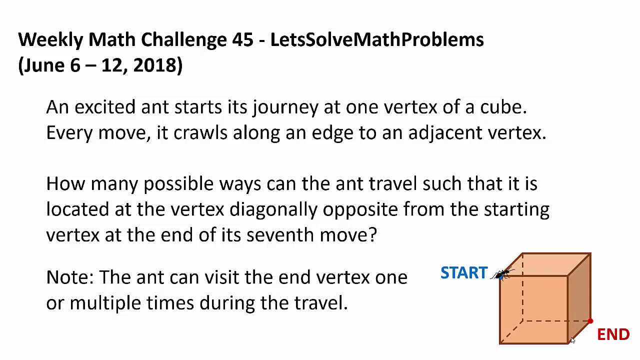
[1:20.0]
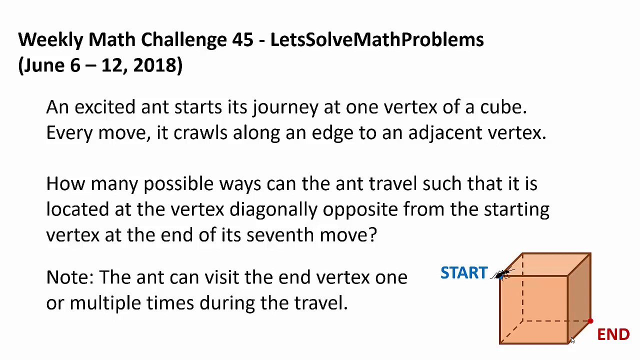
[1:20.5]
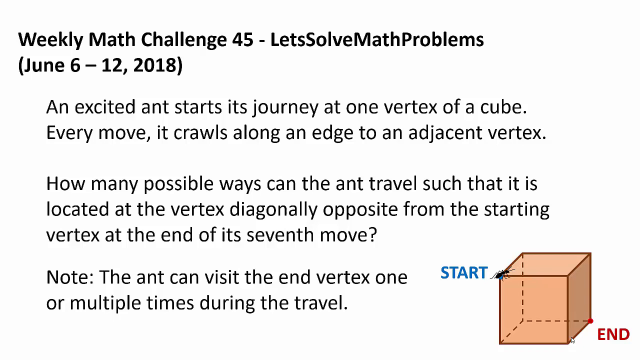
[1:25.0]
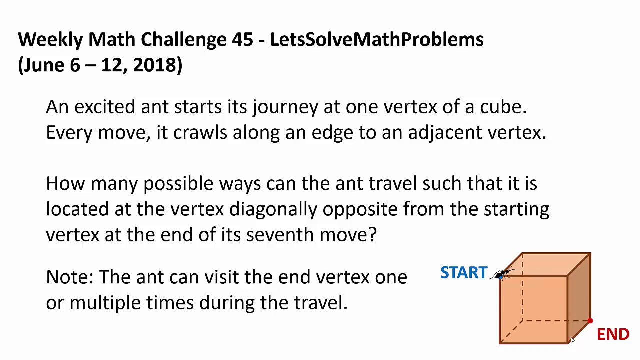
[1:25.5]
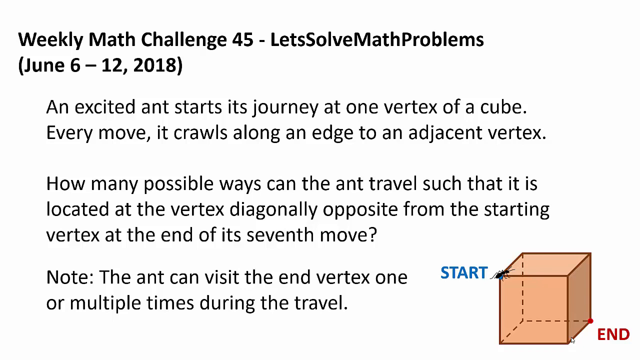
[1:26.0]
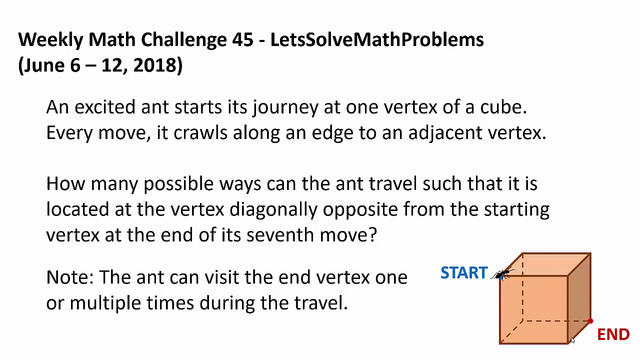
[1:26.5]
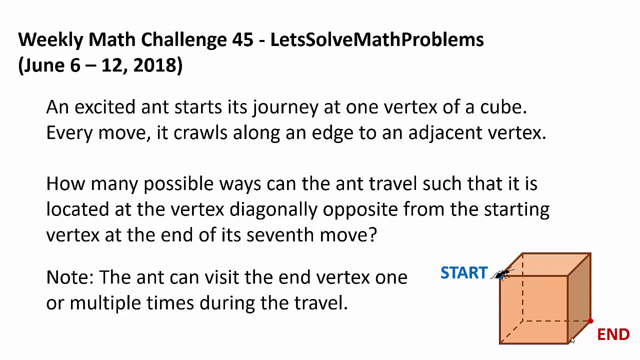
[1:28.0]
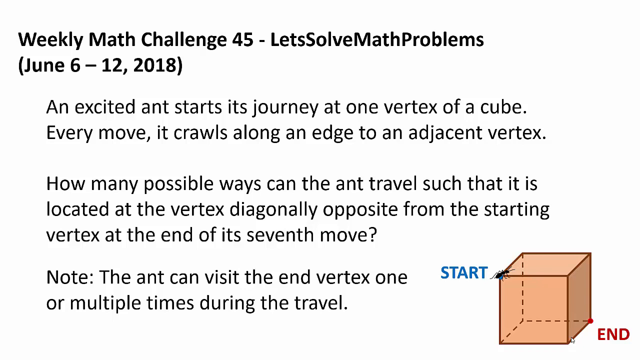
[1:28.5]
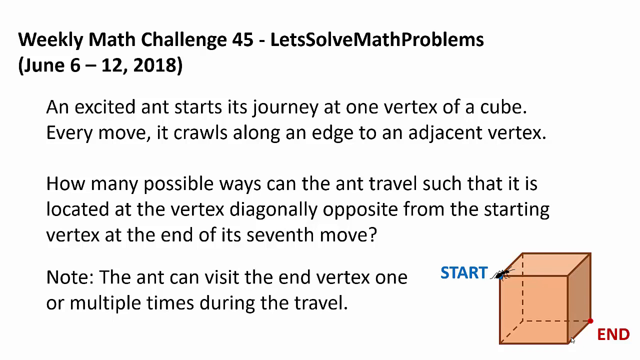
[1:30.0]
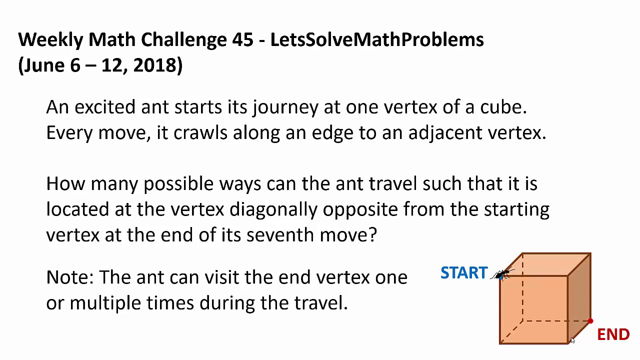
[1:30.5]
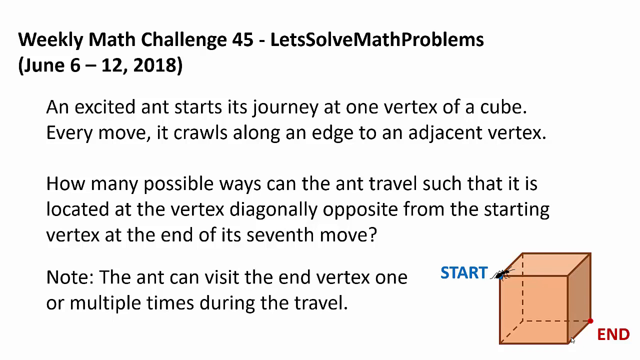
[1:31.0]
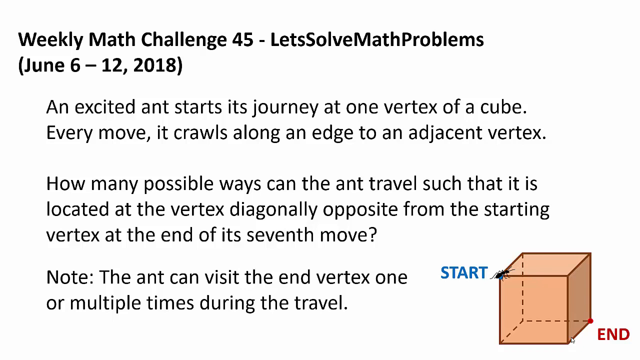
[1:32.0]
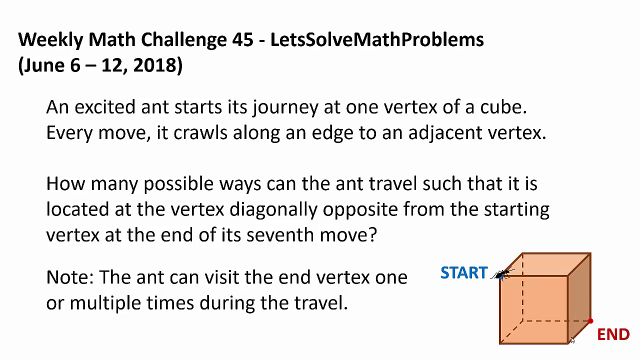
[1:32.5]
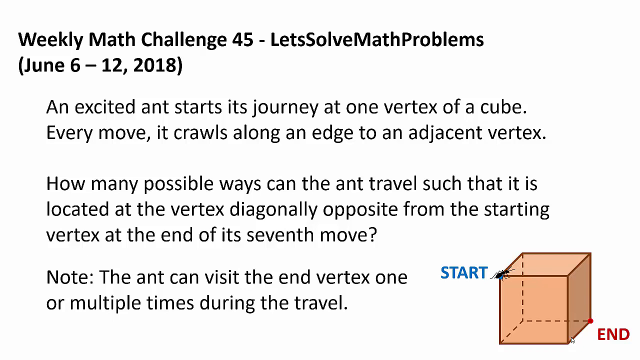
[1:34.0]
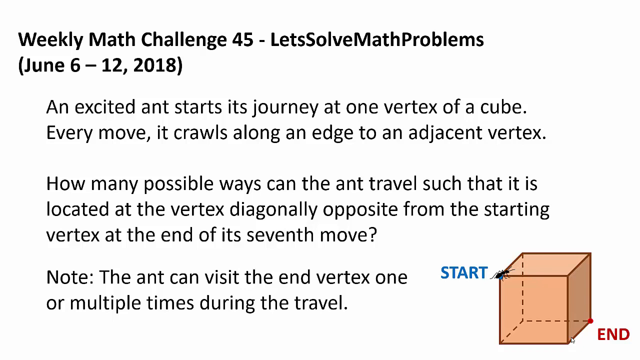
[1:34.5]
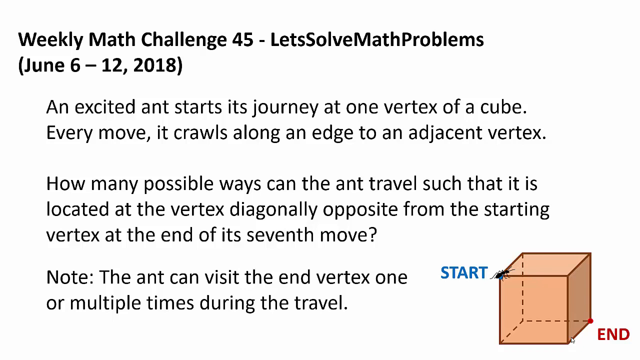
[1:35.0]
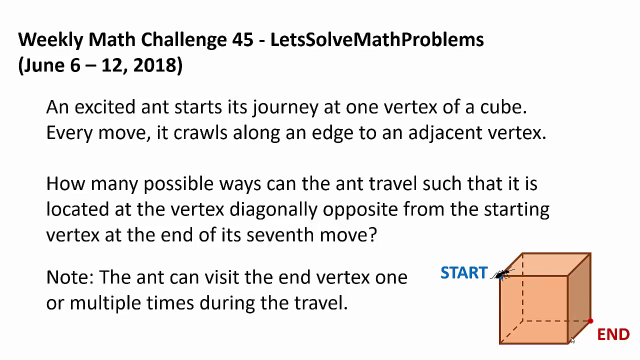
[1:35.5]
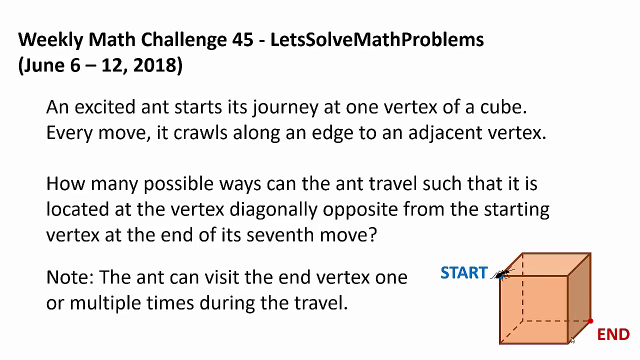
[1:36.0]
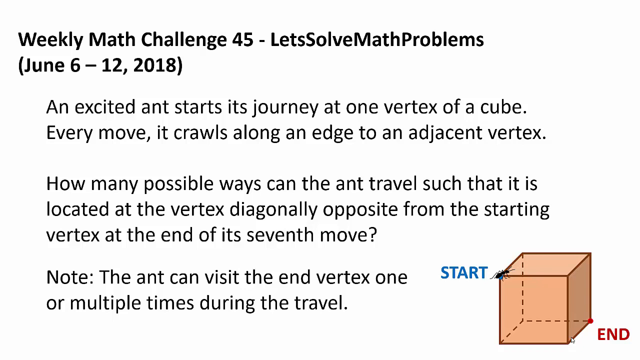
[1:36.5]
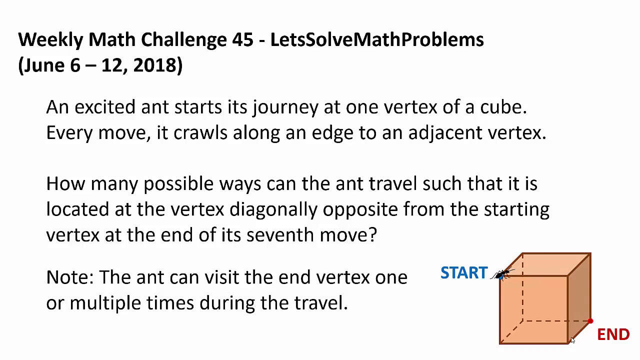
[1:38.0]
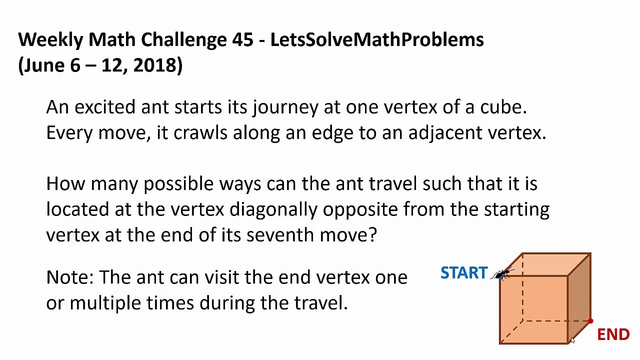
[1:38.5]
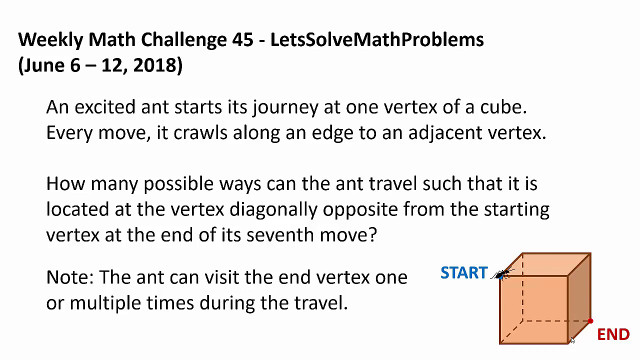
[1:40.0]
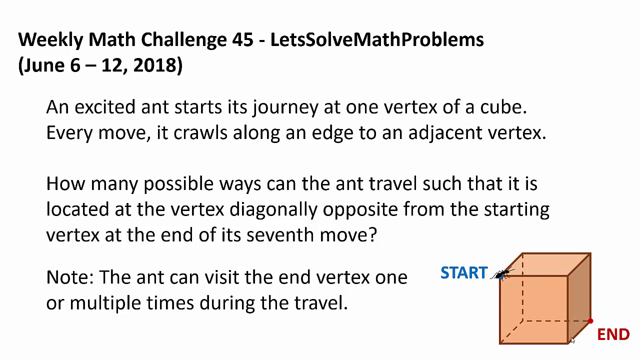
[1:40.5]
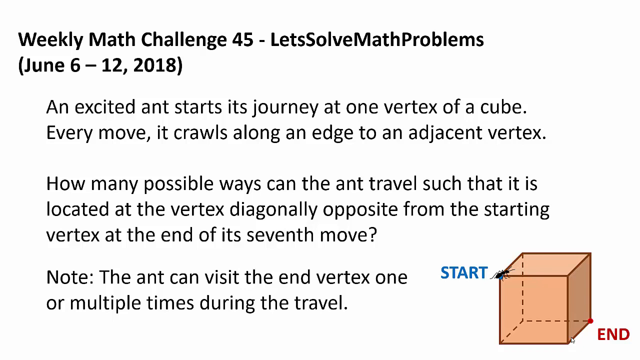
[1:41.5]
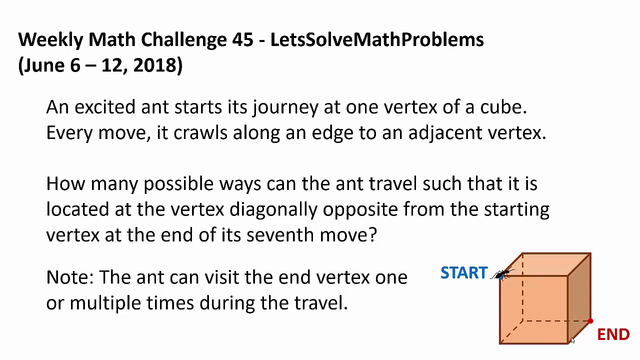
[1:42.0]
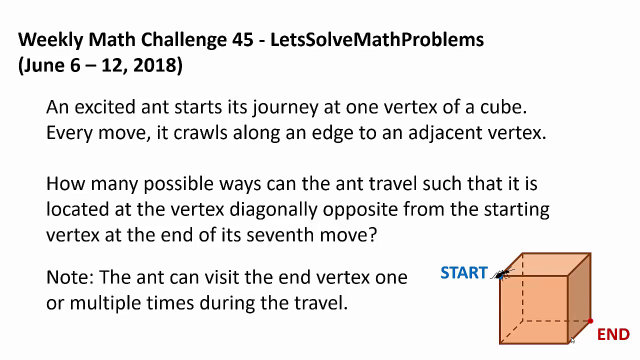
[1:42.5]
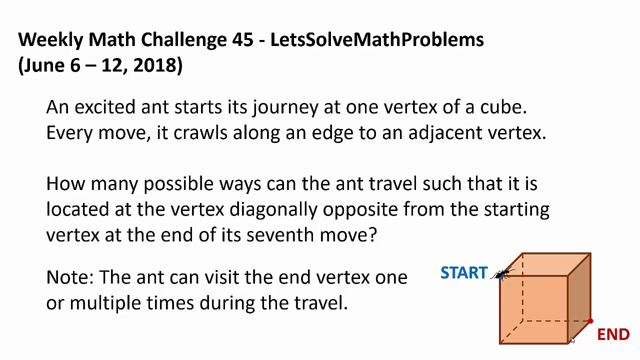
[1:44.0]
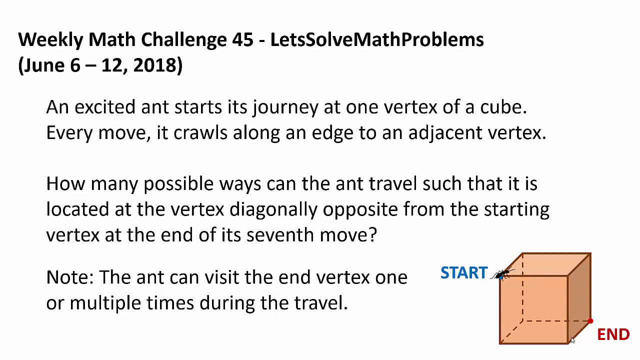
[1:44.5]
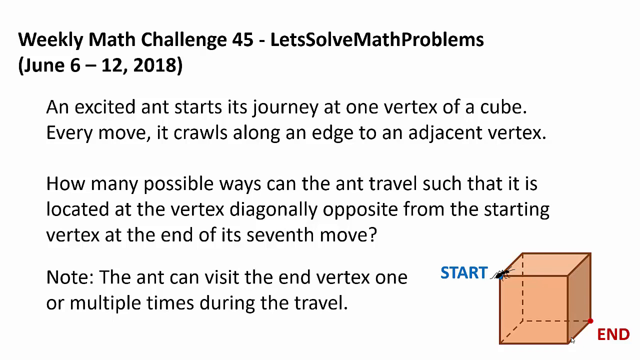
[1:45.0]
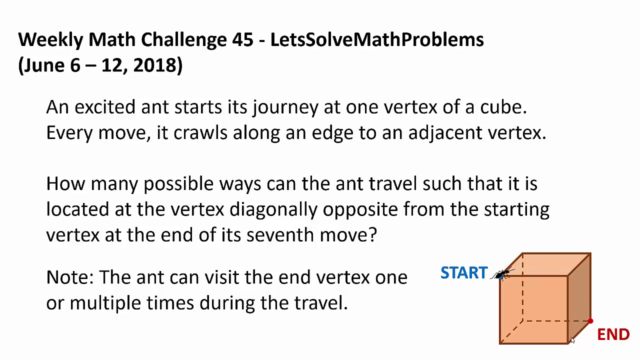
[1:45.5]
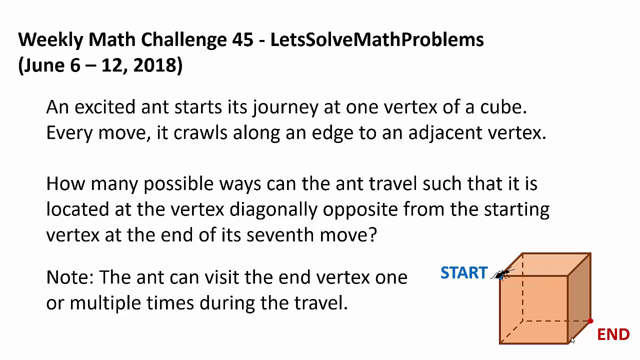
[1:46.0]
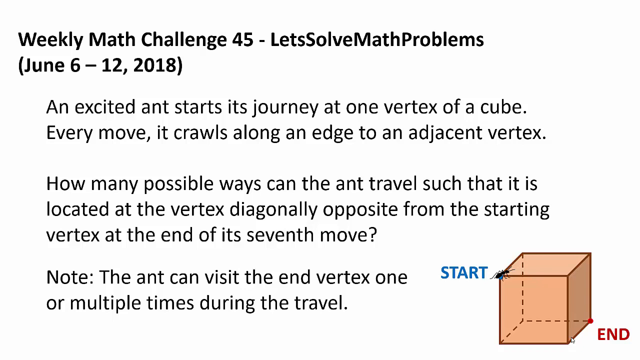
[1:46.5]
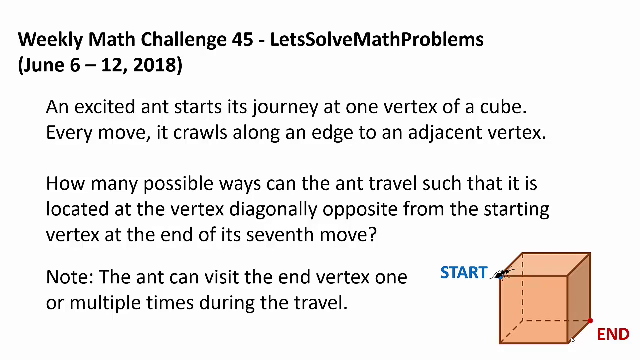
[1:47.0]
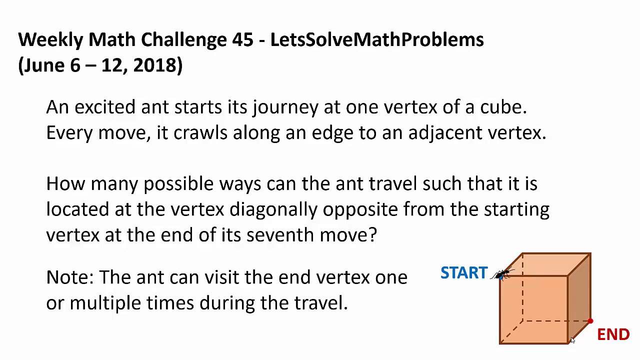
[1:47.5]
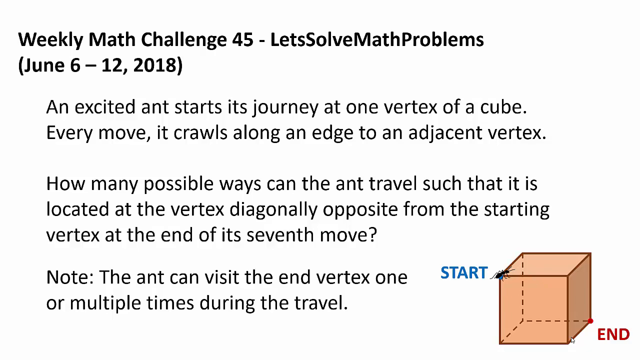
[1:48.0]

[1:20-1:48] A new screen reads "Weekly math challenge 45, let's solve math problems, June 6th to 12th, 2018." Below is a problem about something that crawls along an edge on every move, asking how many possible ways it can travel "such that it is located at the vertex diagonal opposite from the starting vertex at the end of its seventh move", with a note that it can visit the end vertex one or multiple times during the travel. A box in the corner is labeled "start", and lower down a label reads "end".